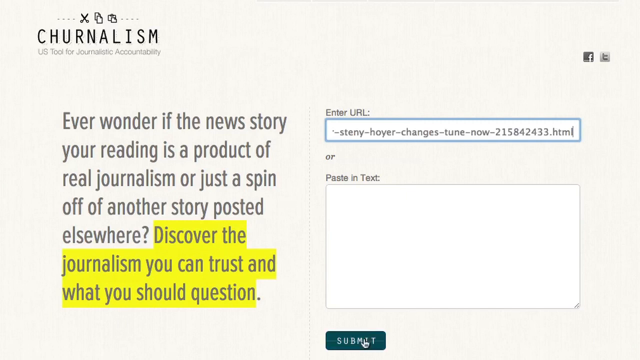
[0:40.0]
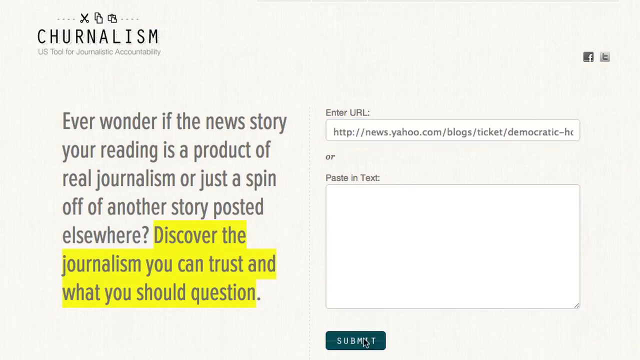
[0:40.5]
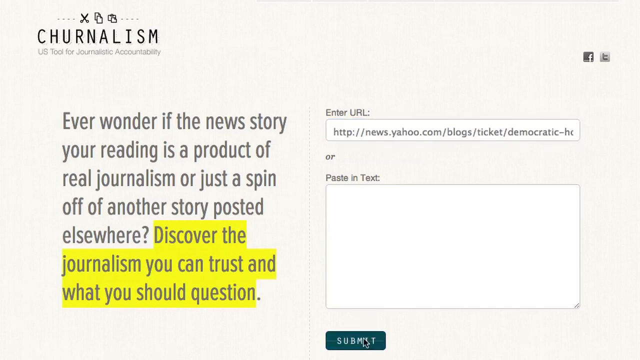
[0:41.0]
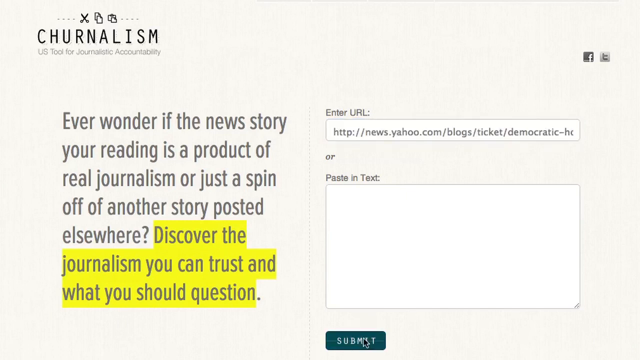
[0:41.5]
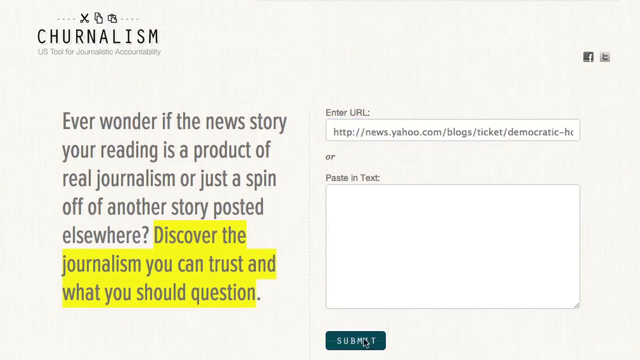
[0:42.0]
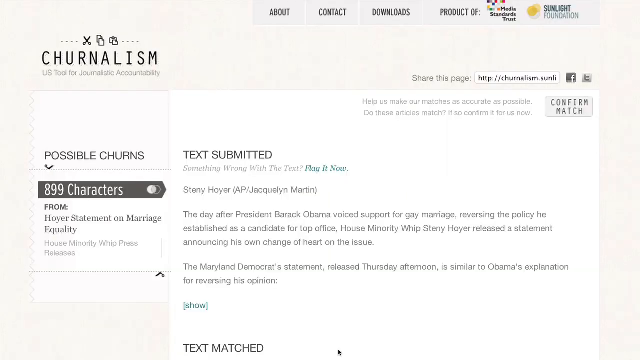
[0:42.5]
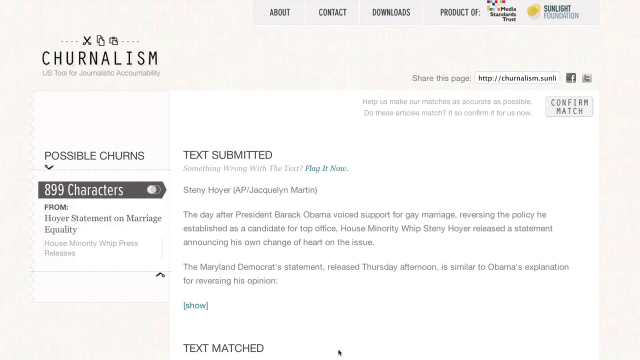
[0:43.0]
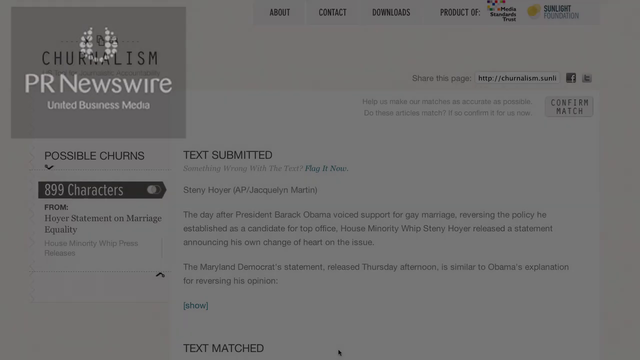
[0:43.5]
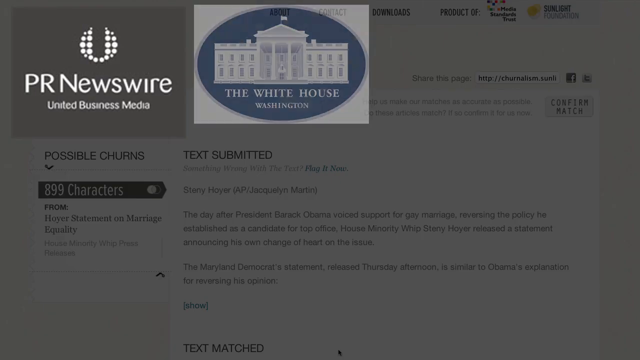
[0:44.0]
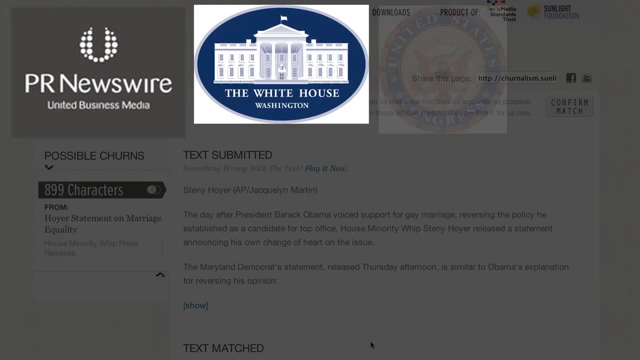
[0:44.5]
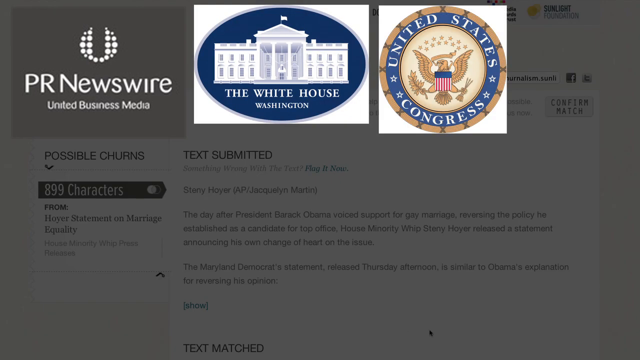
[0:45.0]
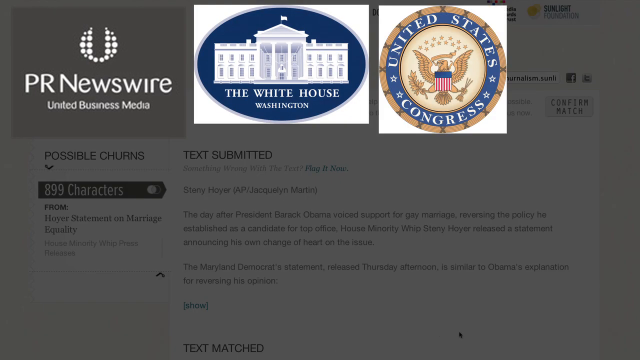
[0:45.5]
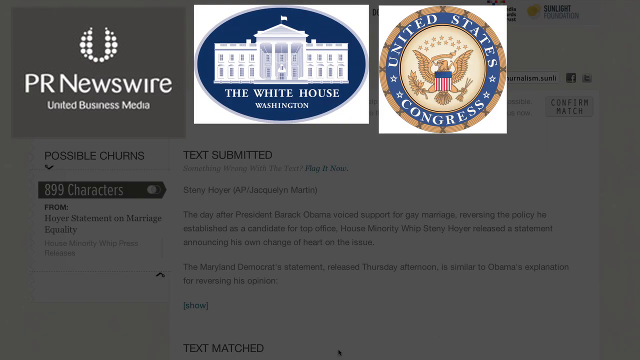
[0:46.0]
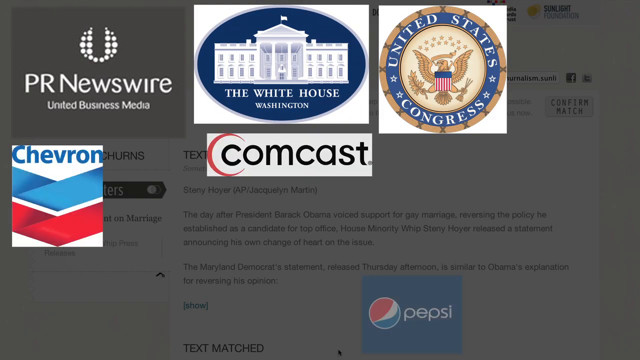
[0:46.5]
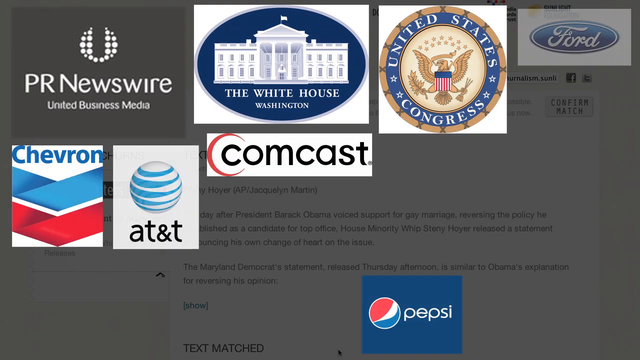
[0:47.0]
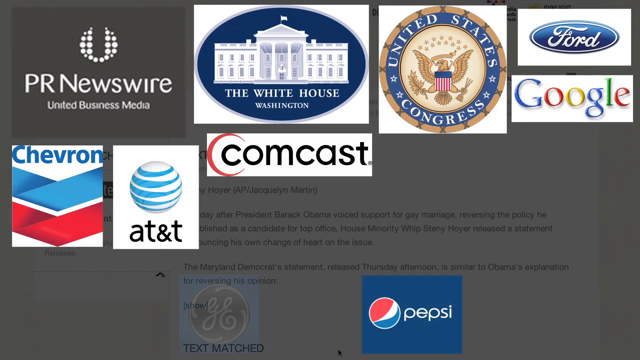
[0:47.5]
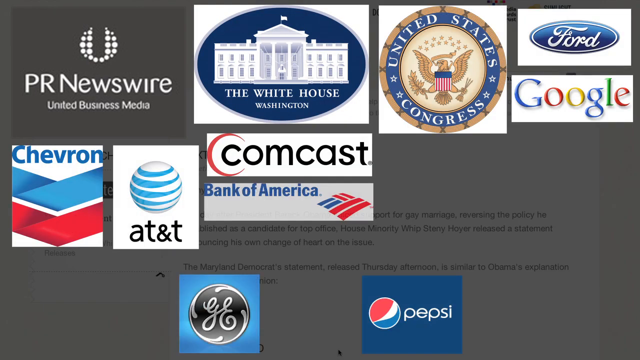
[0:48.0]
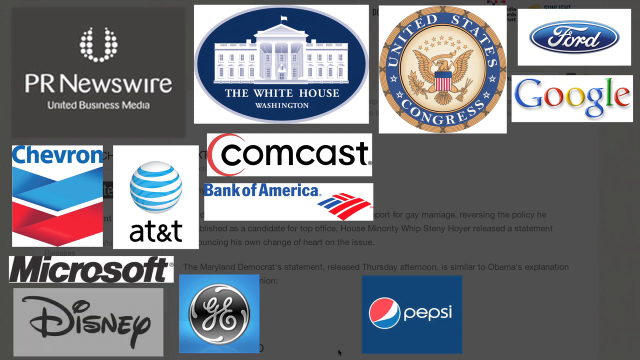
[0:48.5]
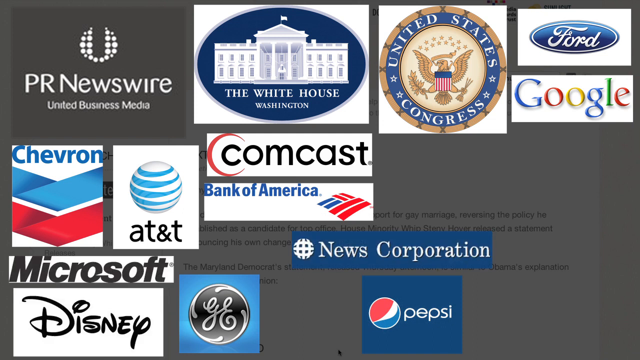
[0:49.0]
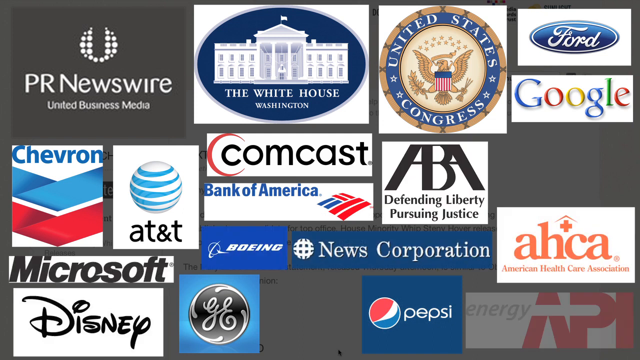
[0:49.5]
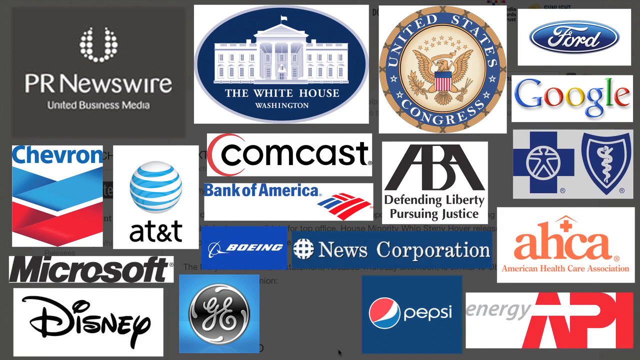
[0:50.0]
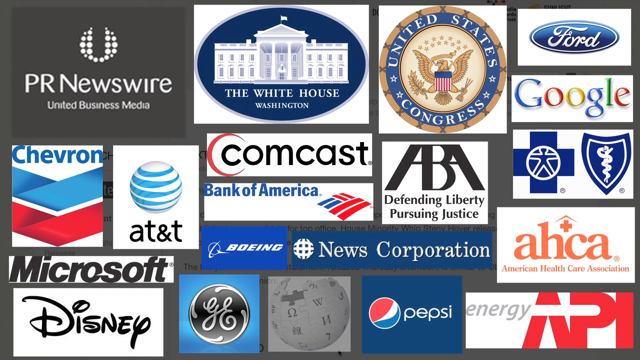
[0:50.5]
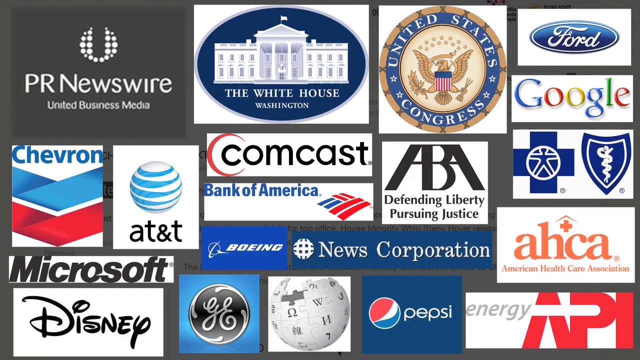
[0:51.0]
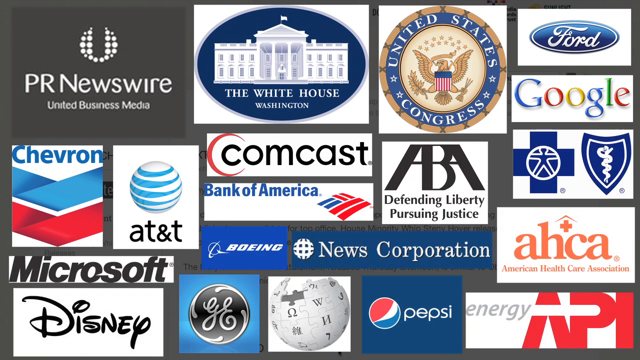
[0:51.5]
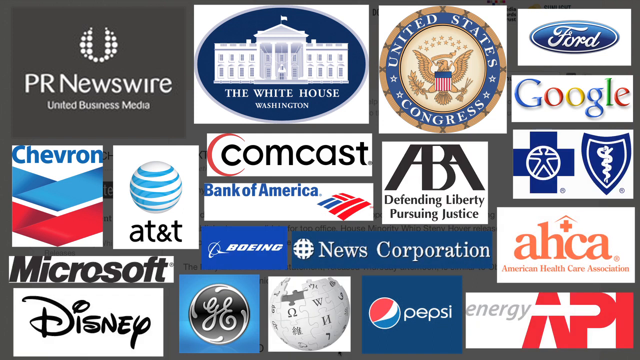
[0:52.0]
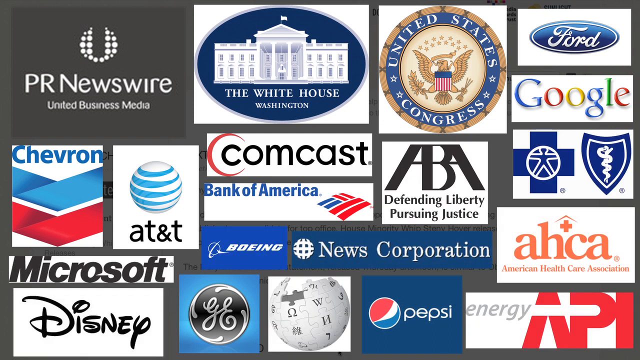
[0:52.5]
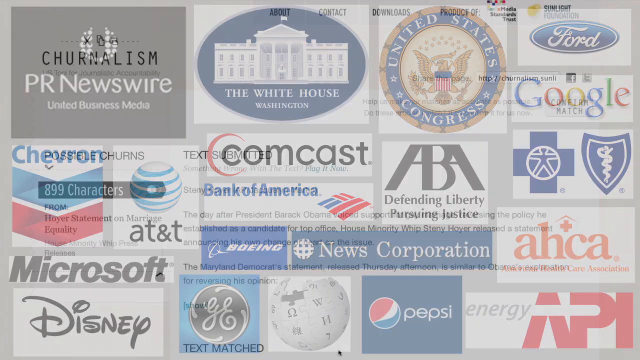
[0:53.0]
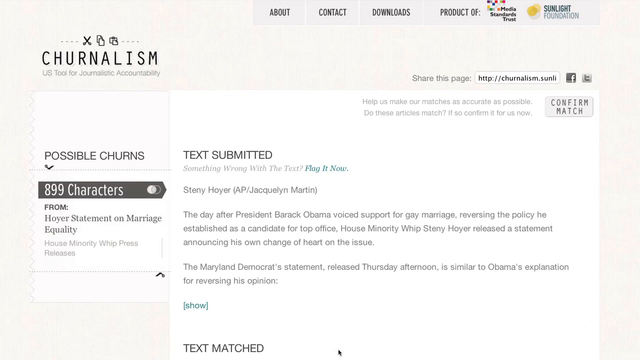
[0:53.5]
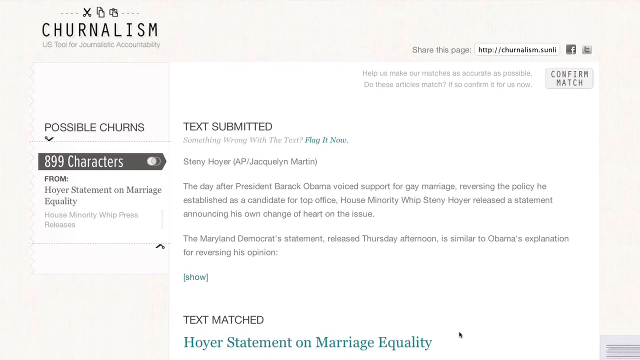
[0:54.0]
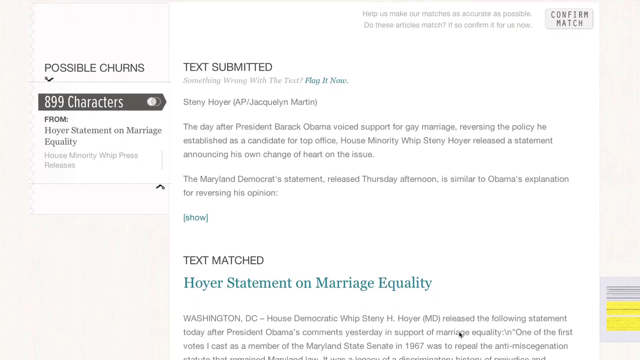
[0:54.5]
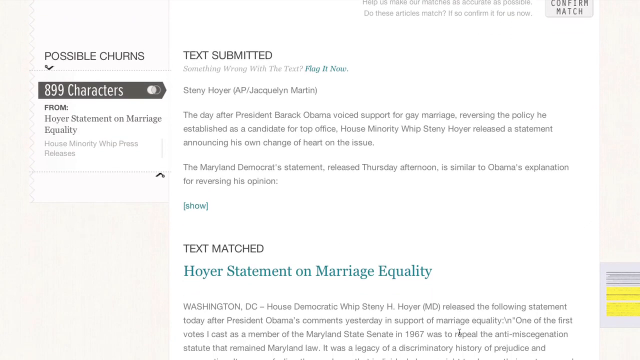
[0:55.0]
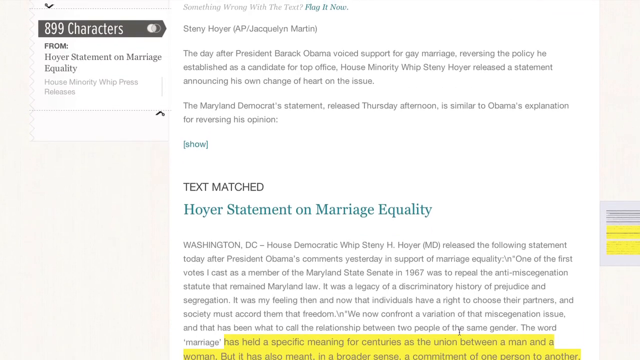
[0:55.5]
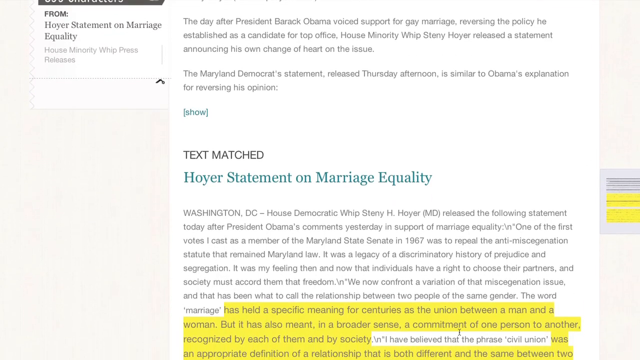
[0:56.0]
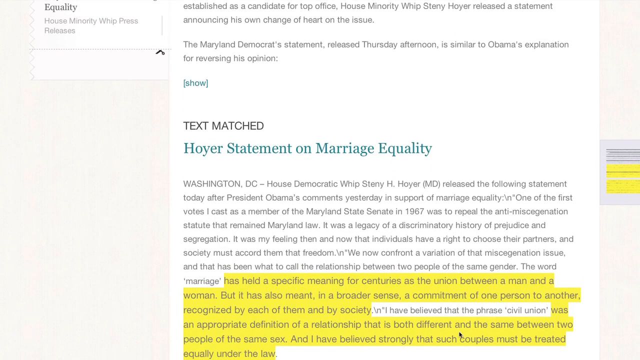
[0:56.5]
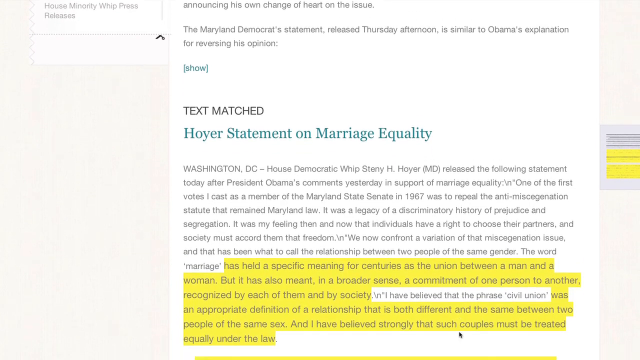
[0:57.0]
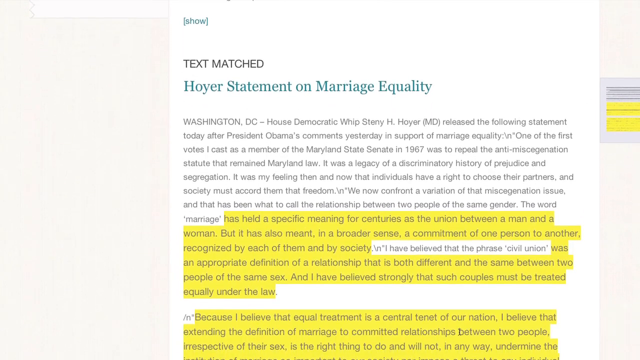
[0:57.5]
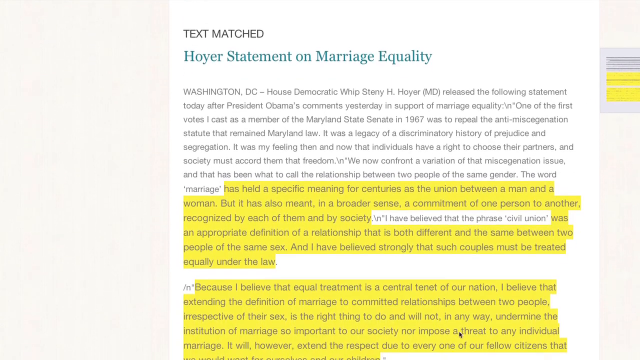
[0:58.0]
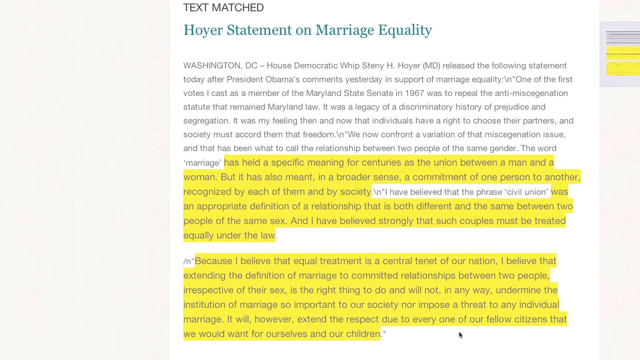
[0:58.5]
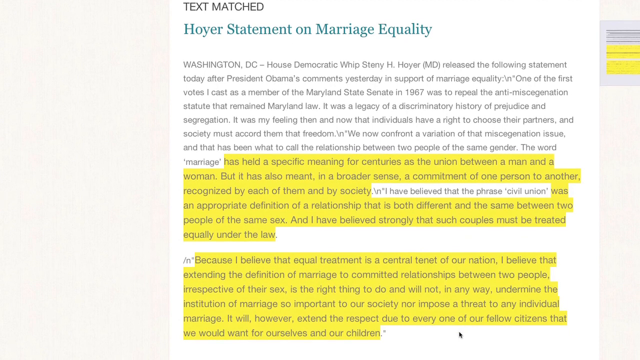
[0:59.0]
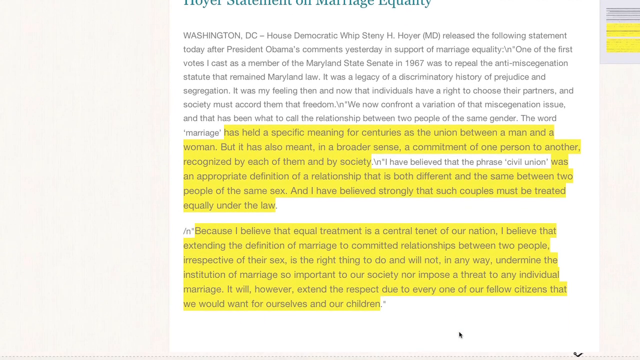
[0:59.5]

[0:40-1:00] A page that seems to be a web page for a business says "Journalism," and right above it are little computer-style icons of scissors, what looks like paper, and what looks like a clipboard and possibly paper. Below that it says "Journalism" again, then "U.S. tool for journalistic accountability," and then "ever wonder if the news story you're reading is a product of real journalism or just a spin-off of another story posted elsewhere." A highlighted section says "discover the journalism you can trust and what you should question." There is an enter-URL area with a URL in it, and then another page opens showing what appear to be icons representing companies, such as one related to the White House and a Comcast icon, with various other businesses covering the screen.